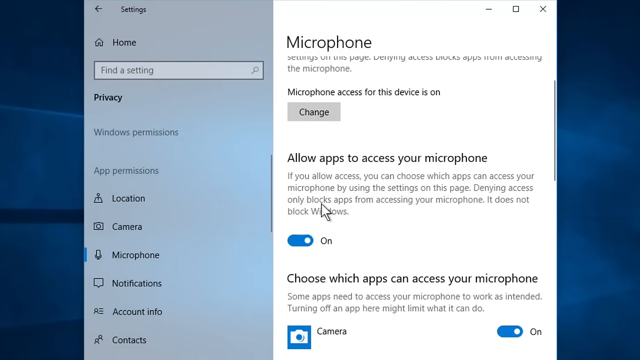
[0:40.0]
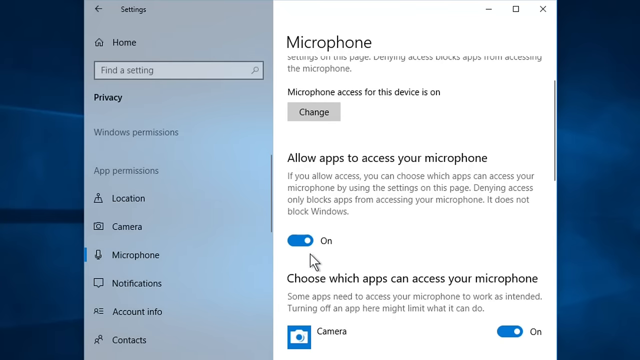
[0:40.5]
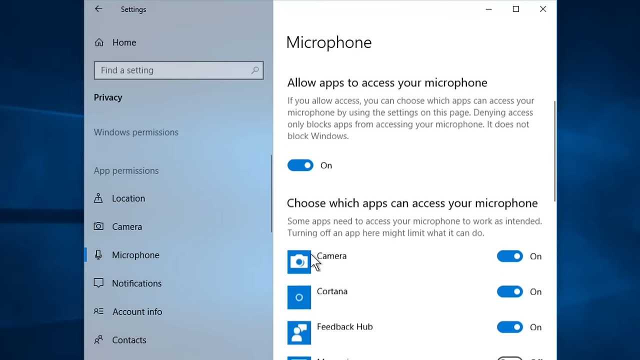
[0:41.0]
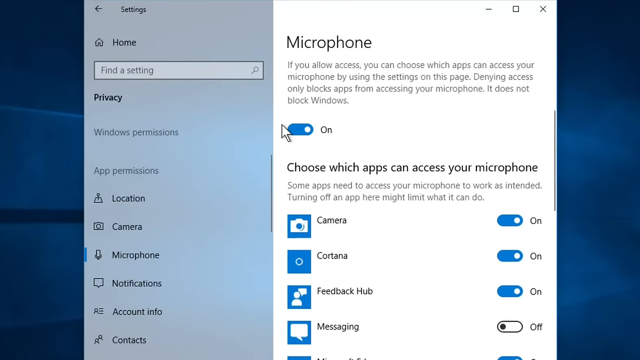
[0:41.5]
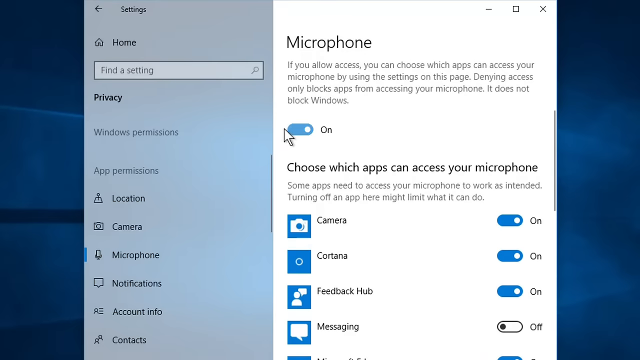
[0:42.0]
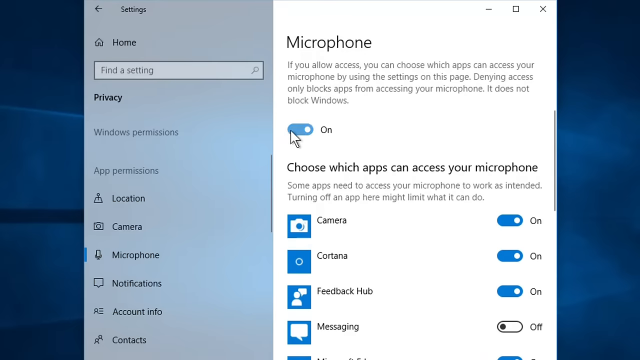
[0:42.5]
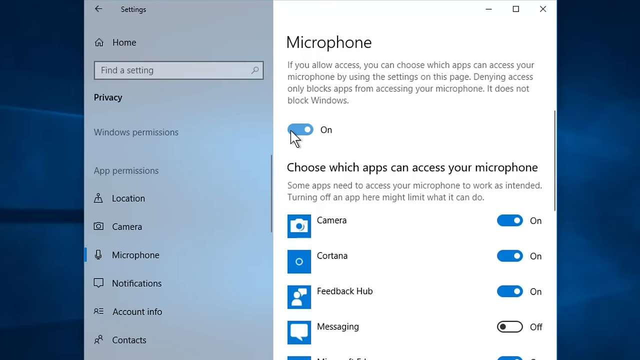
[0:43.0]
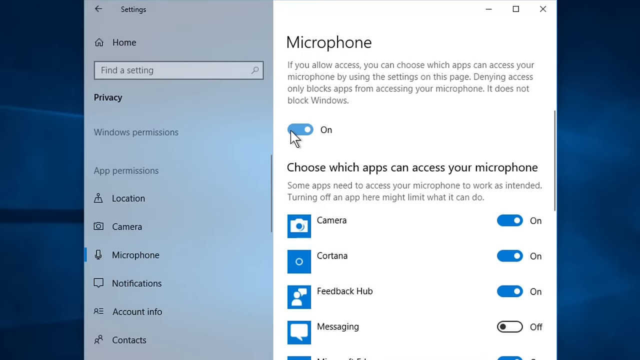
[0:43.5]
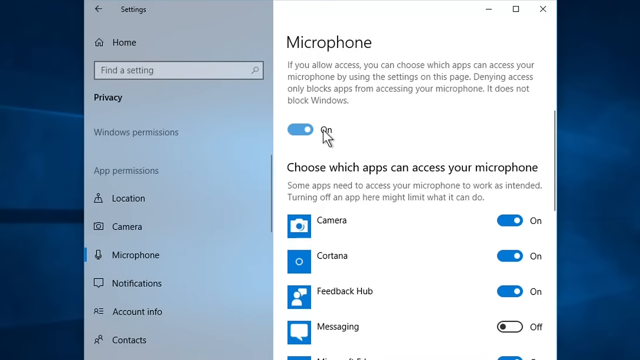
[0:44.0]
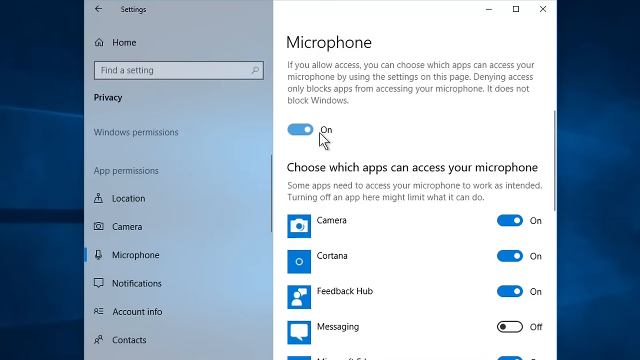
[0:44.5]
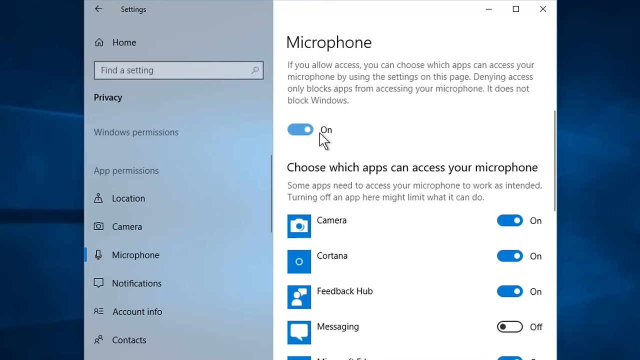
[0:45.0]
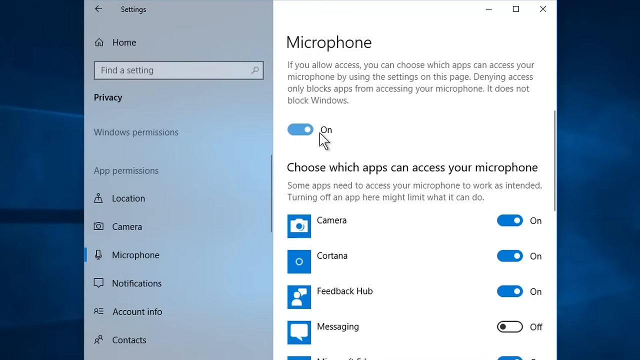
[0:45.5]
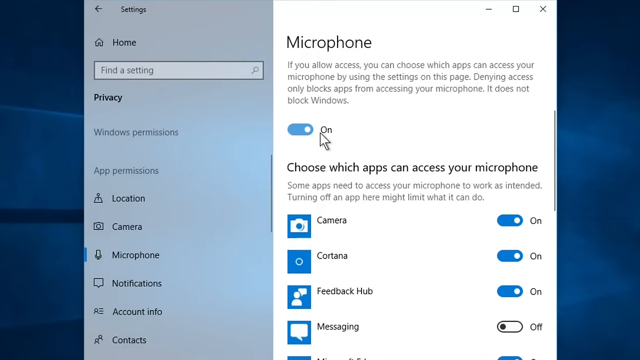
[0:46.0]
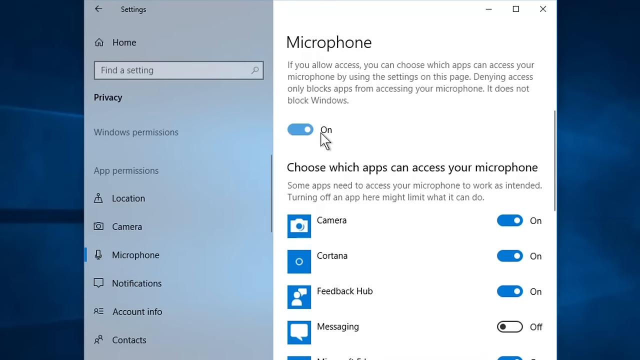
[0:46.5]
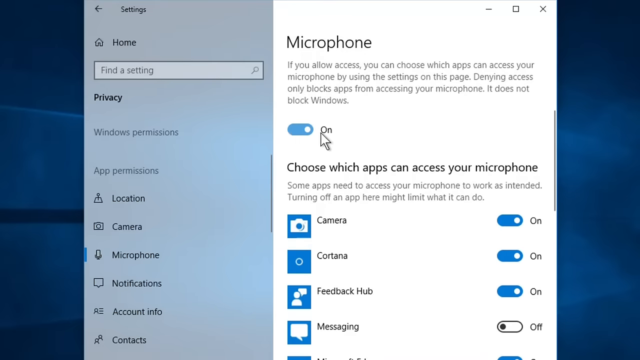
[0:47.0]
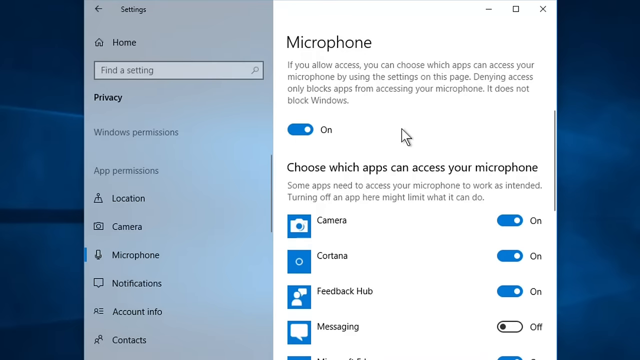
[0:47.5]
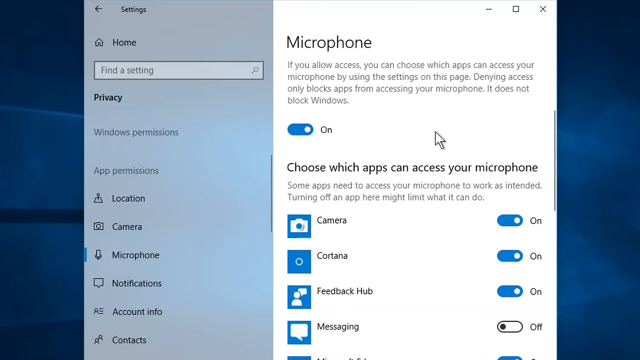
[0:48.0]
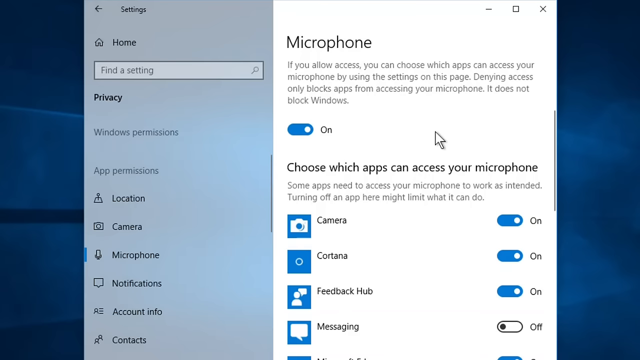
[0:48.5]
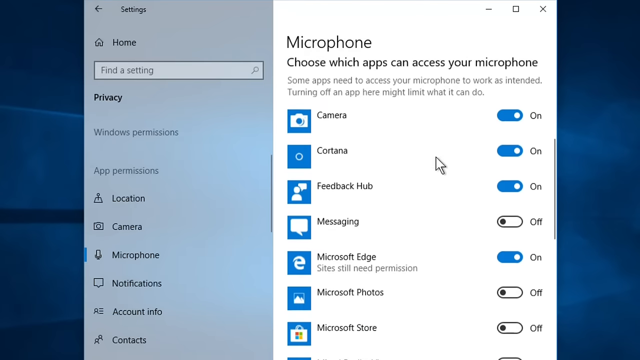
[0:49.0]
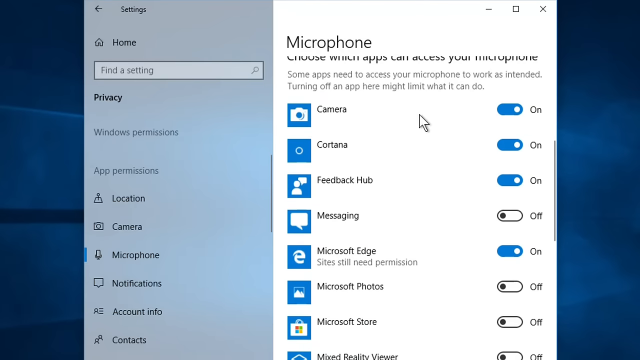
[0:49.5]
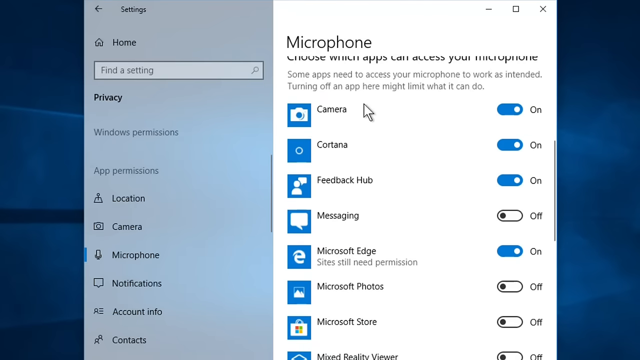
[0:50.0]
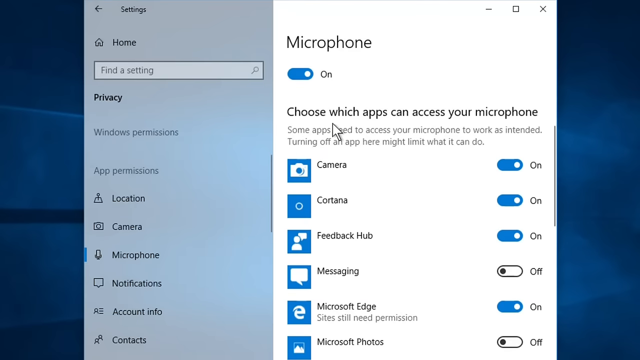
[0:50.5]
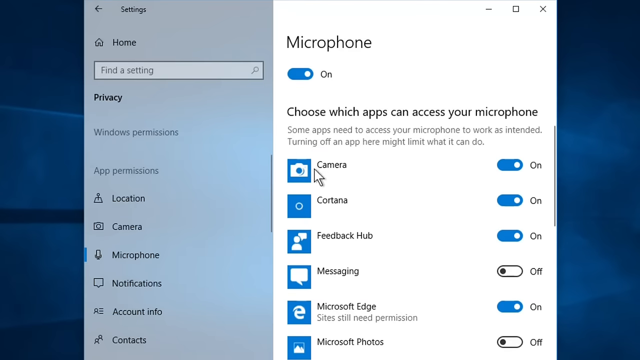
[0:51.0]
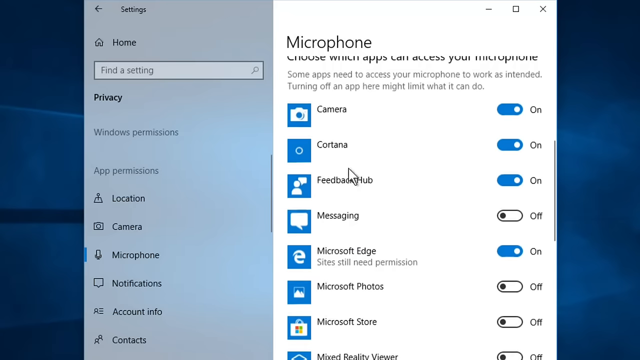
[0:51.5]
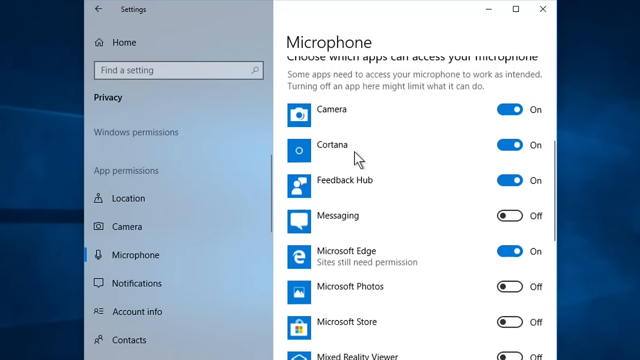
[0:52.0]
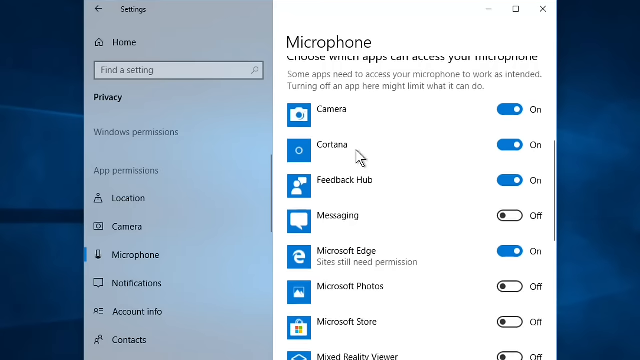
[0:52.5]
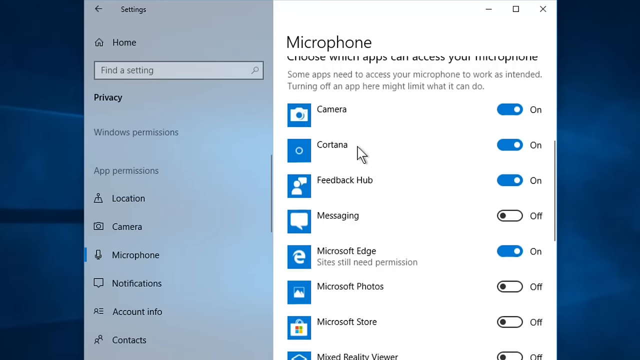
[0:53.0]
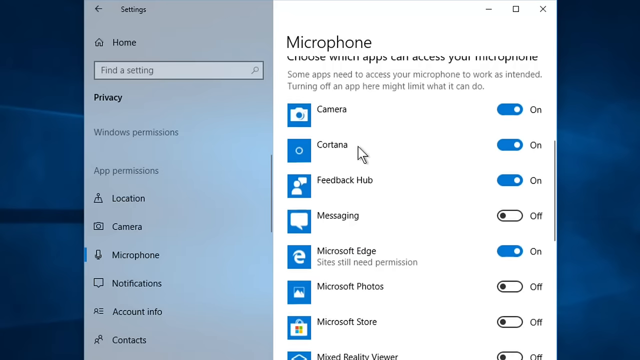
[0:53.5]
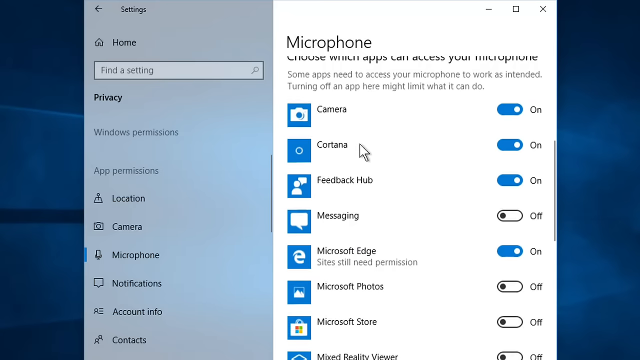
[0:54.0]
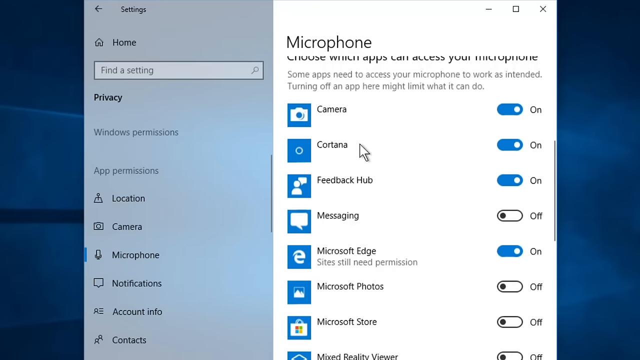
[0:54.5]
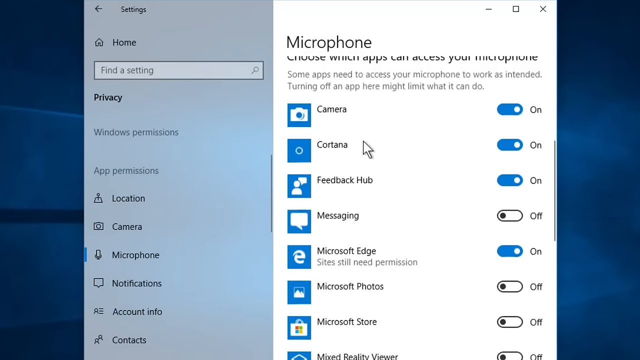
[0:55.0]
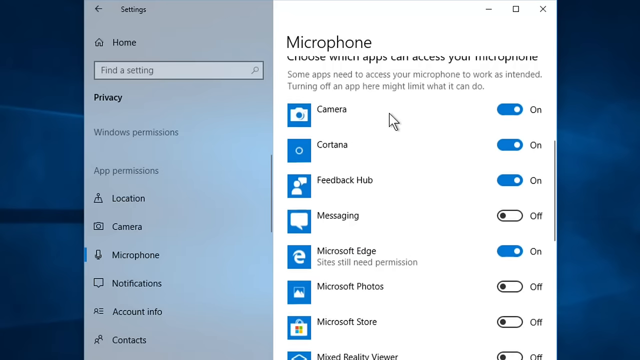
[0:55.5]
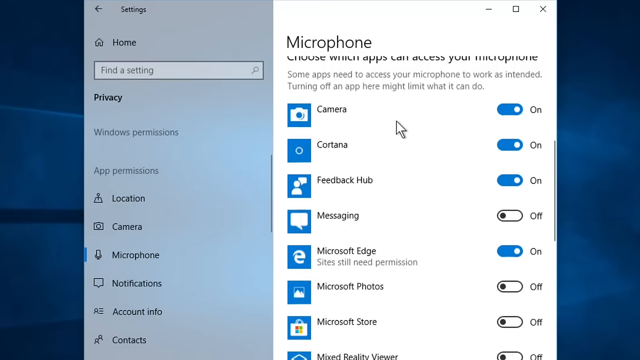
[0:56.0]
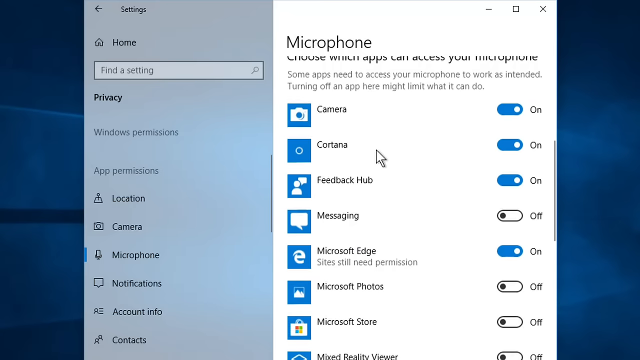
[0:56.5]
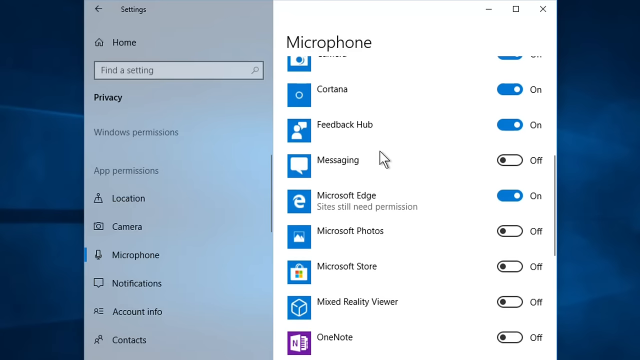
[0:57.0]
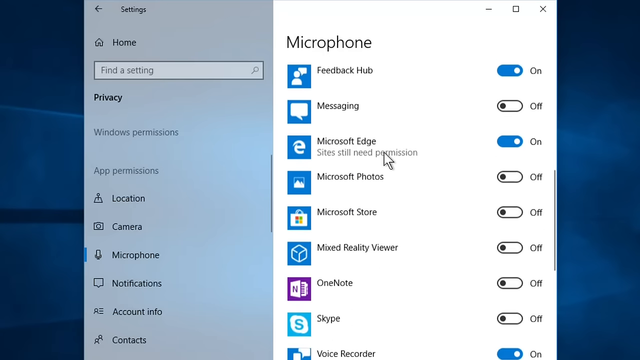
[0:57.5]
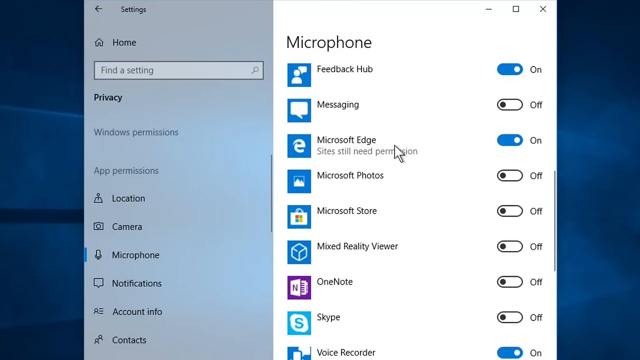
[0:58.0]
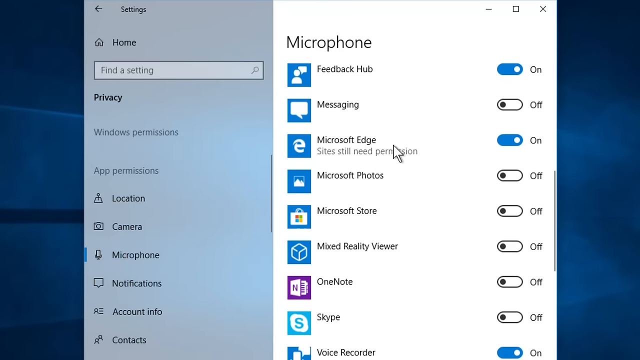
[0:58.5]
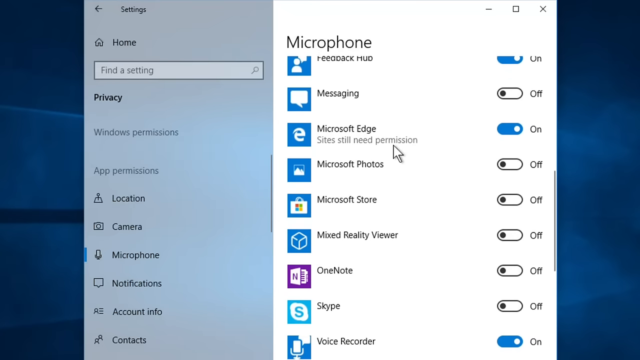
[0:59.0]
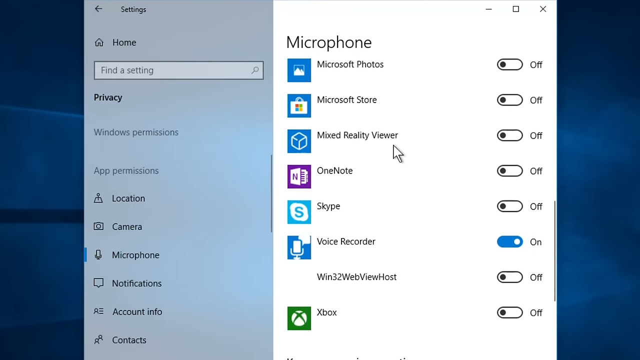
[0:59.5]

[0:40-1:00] The cursor hangs around the On button, which is a toggle switched to the right, indicating On. Instead of clicking it, the person scrolls down a little to more settings in a section that says "Choose which apps can access your microphone". The list includes Camera, Cortana and Feedback Hub, each with a blue and white icon on the left and an on/off toggle button on the right. The cursor pauses and scrolls down further, at times quickly and at times pausing, never actually clicking anything. Other options include Microsoft Edge and Microsoft Photos. Some are marked On and some Off: the On toggles are mostly blue with a white button on the right, and the Off ones are mostly white with a blue button on the left. One icon, for OneNote, is purple and white instead of blue and white. There is a light blue Skype icon, and at the very bottom, as far as the list has been scrolled, a green and white icon for Xbox.